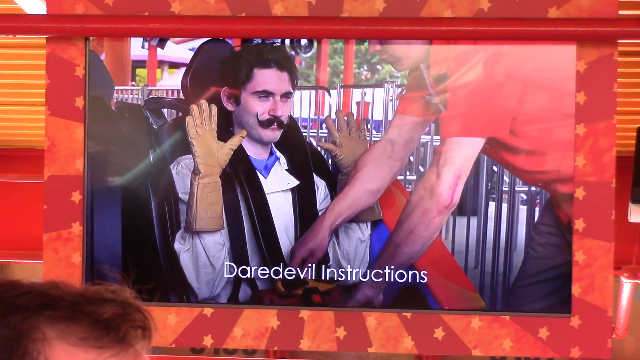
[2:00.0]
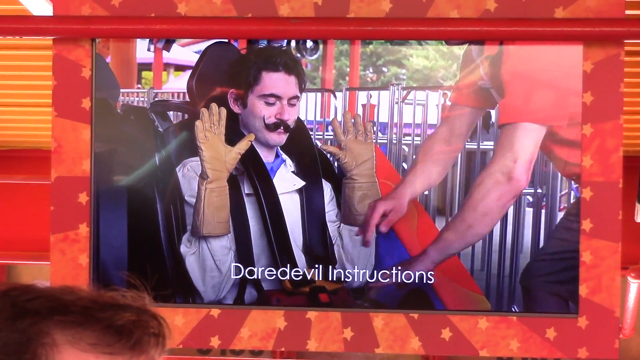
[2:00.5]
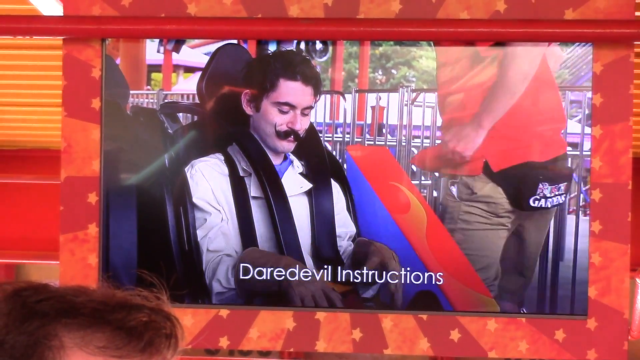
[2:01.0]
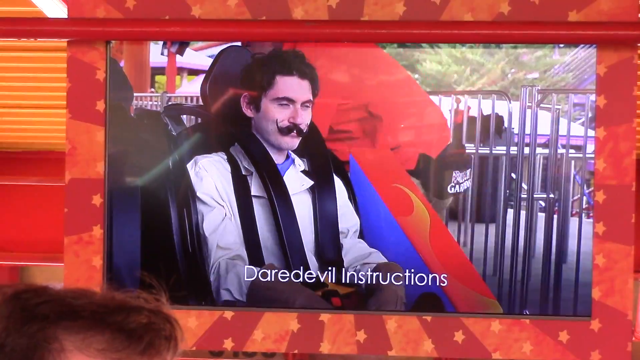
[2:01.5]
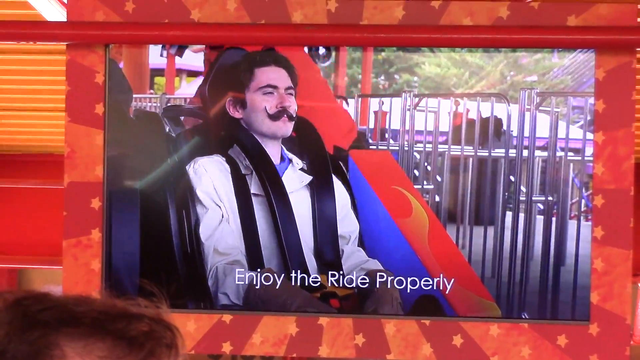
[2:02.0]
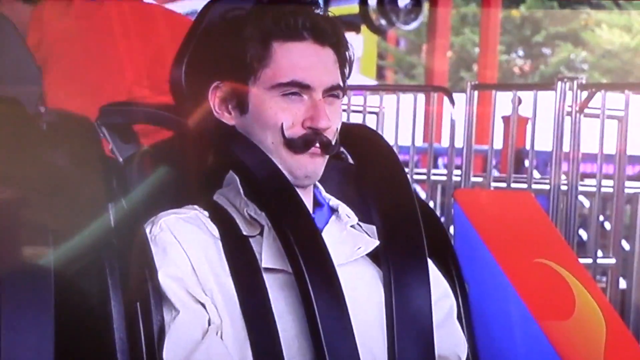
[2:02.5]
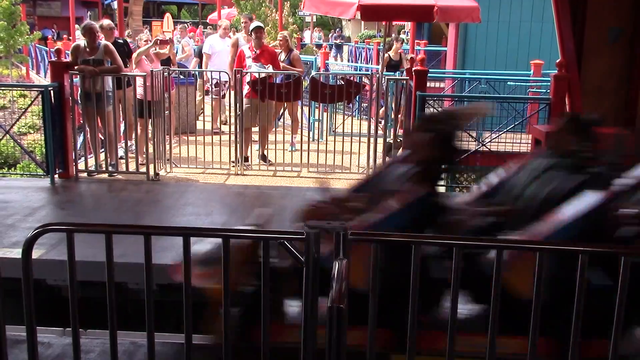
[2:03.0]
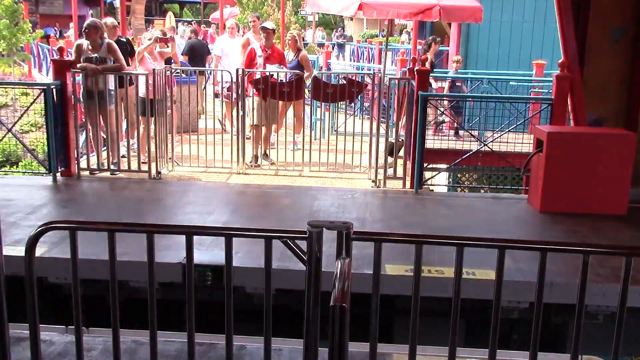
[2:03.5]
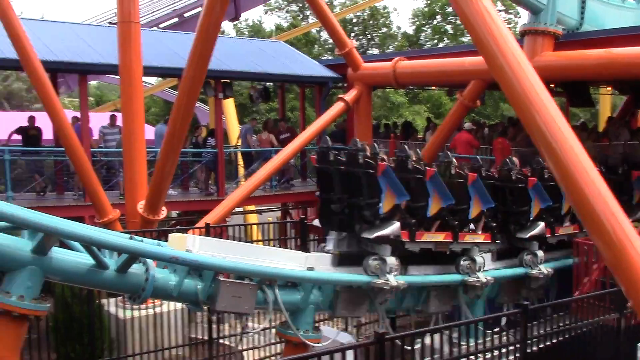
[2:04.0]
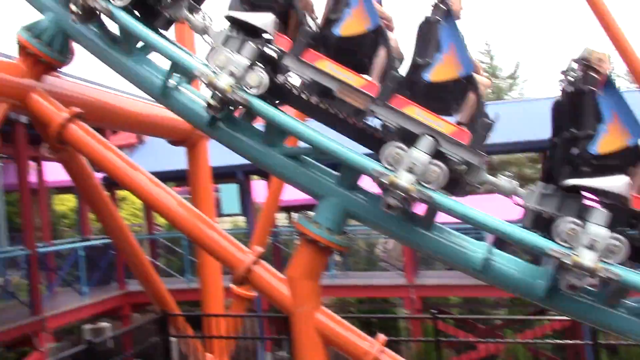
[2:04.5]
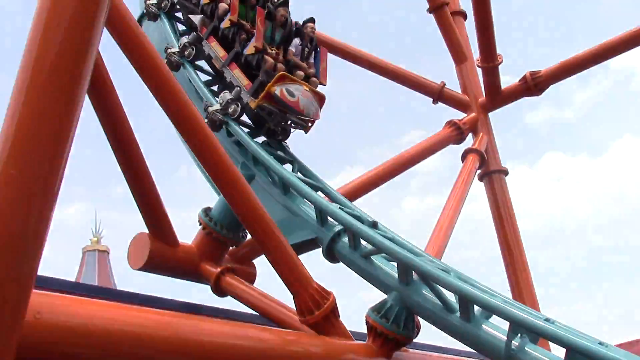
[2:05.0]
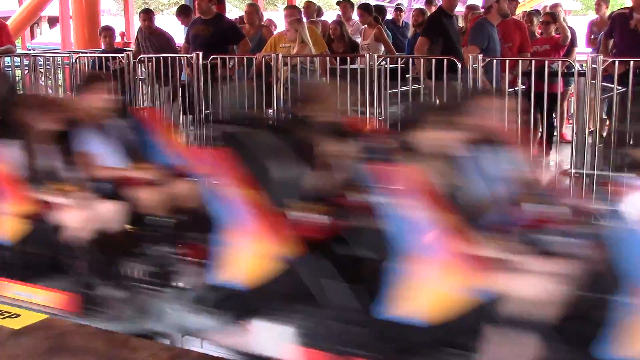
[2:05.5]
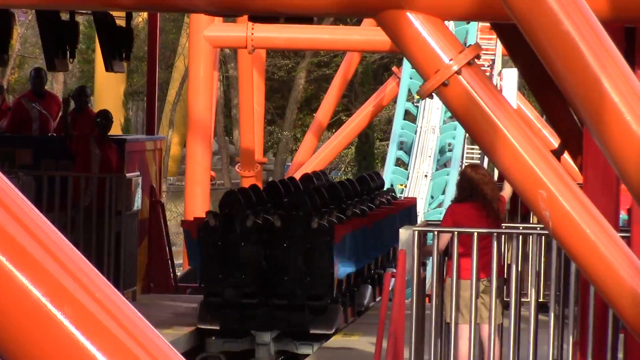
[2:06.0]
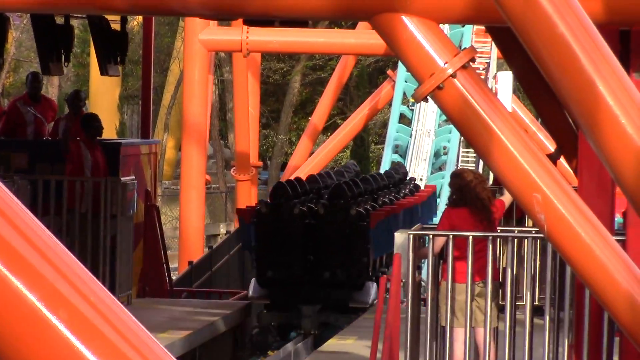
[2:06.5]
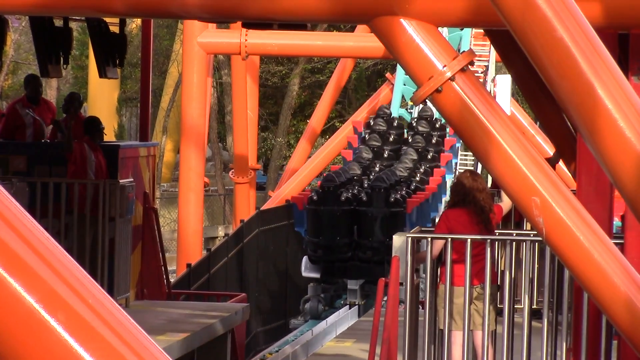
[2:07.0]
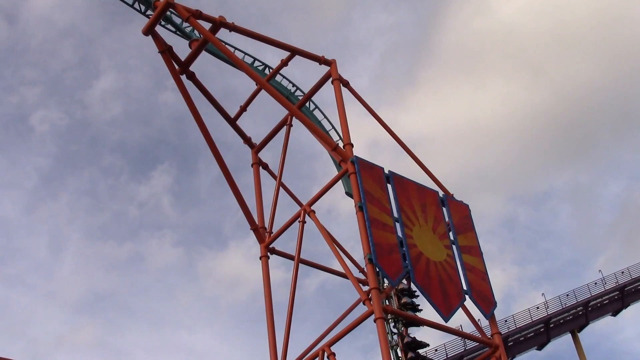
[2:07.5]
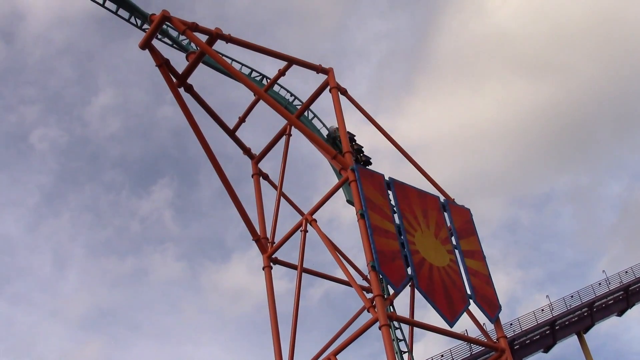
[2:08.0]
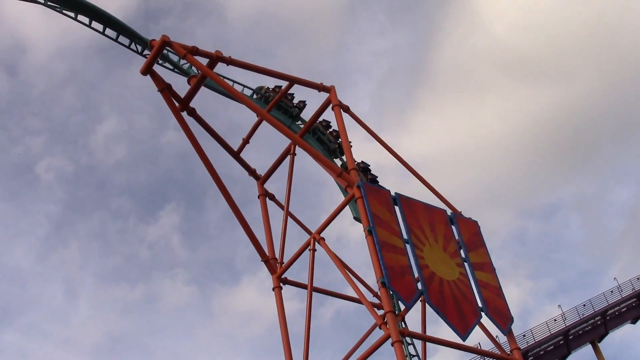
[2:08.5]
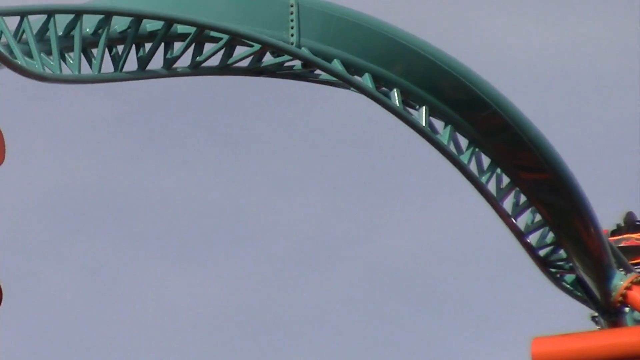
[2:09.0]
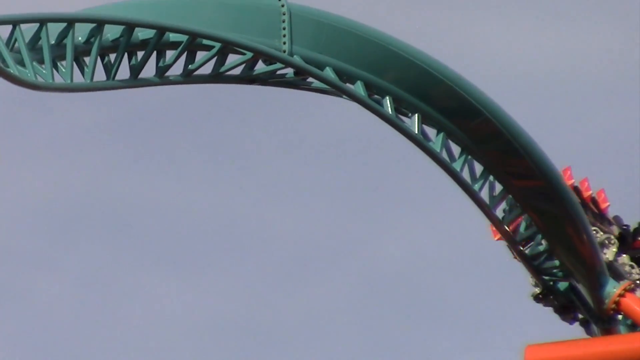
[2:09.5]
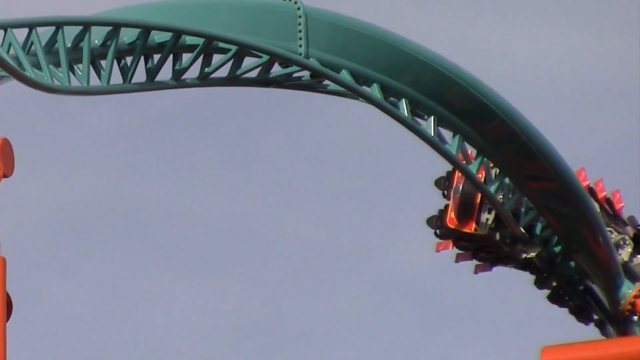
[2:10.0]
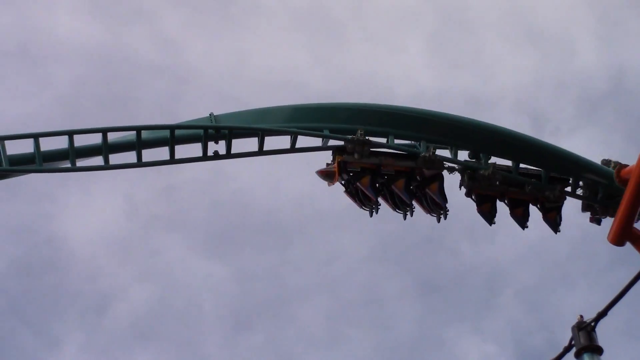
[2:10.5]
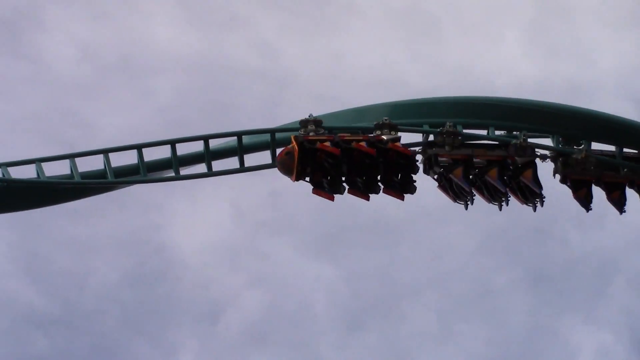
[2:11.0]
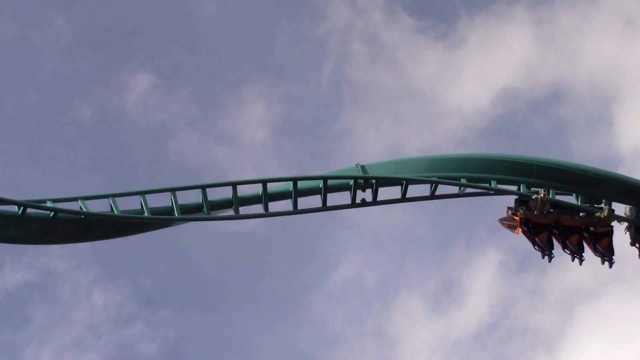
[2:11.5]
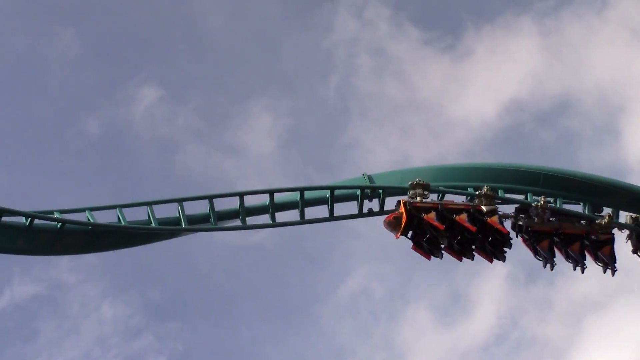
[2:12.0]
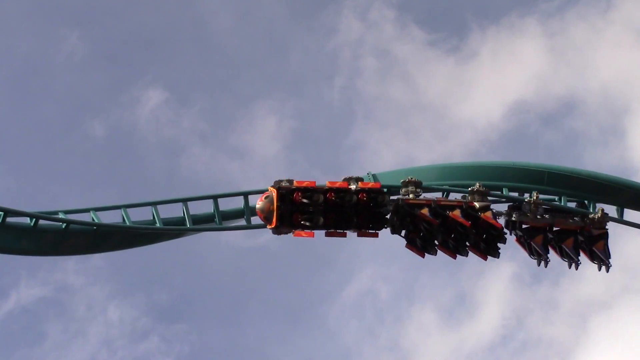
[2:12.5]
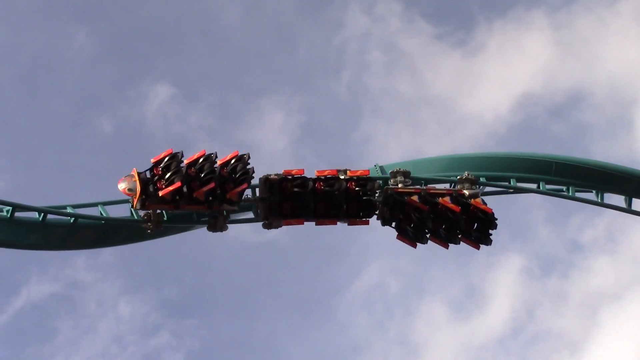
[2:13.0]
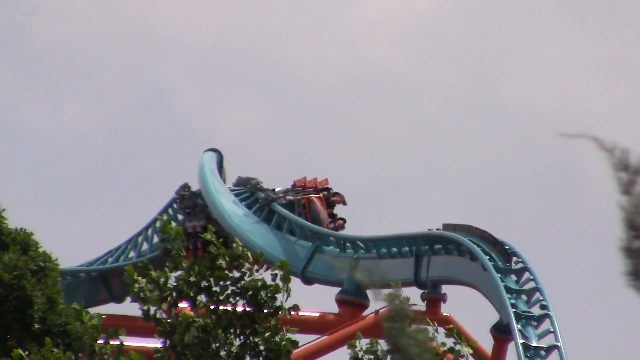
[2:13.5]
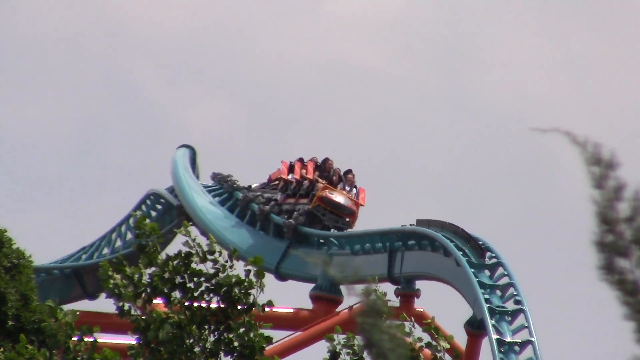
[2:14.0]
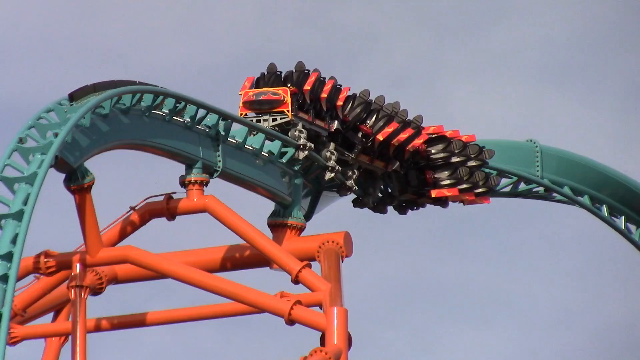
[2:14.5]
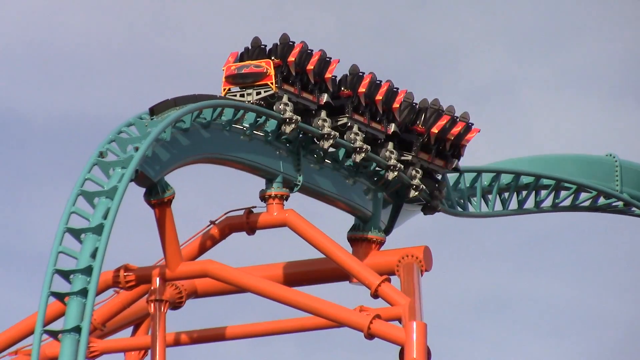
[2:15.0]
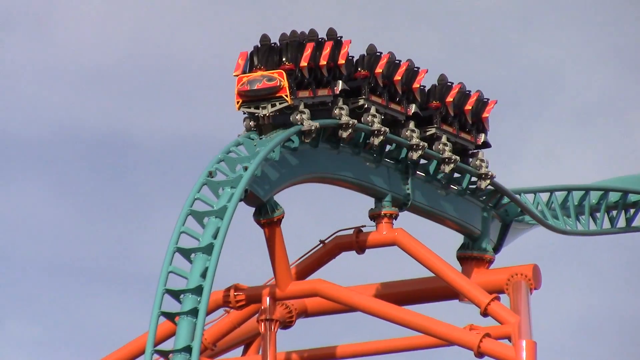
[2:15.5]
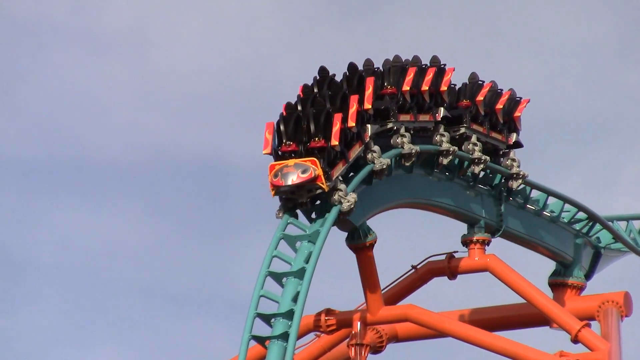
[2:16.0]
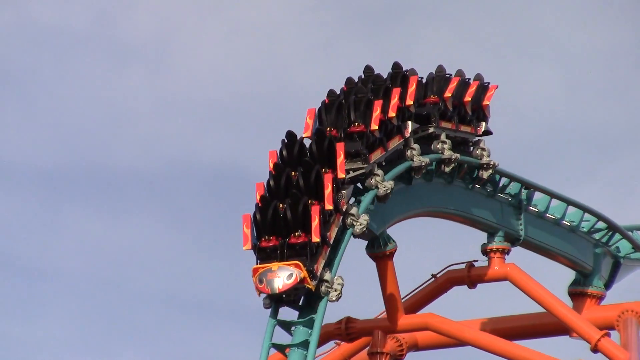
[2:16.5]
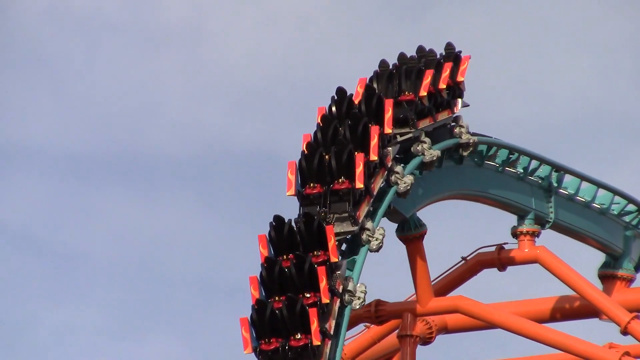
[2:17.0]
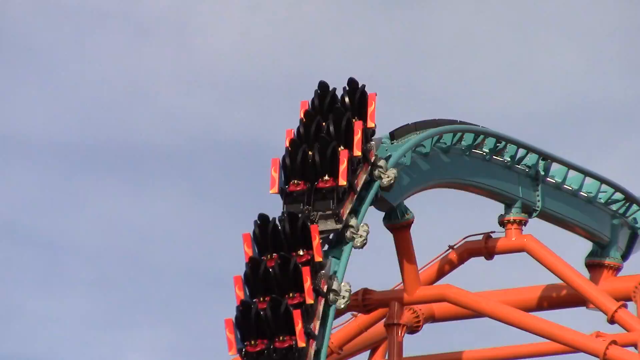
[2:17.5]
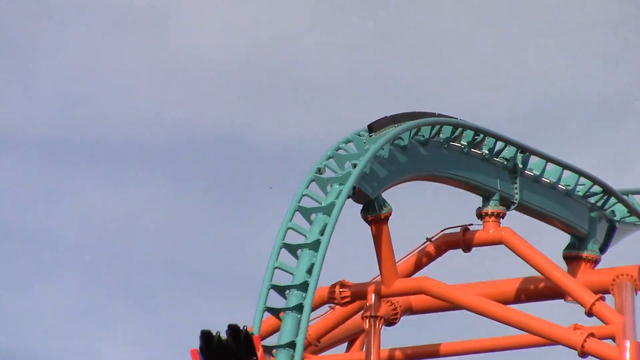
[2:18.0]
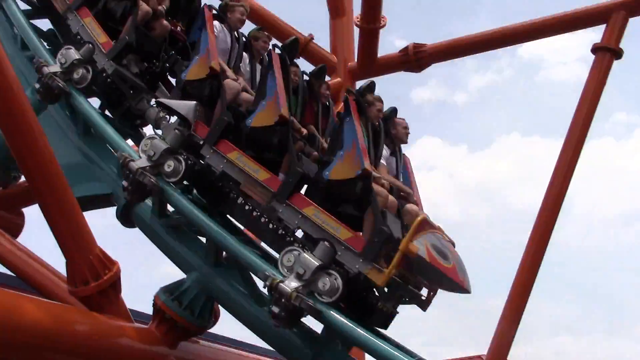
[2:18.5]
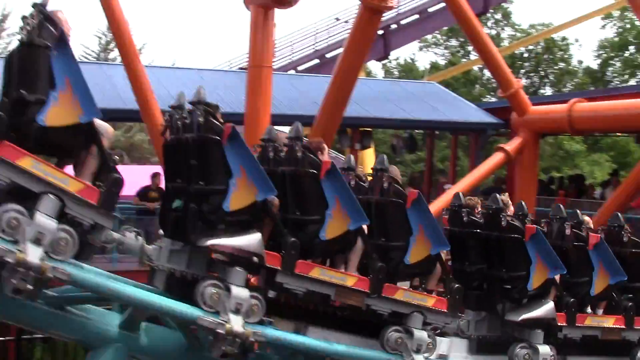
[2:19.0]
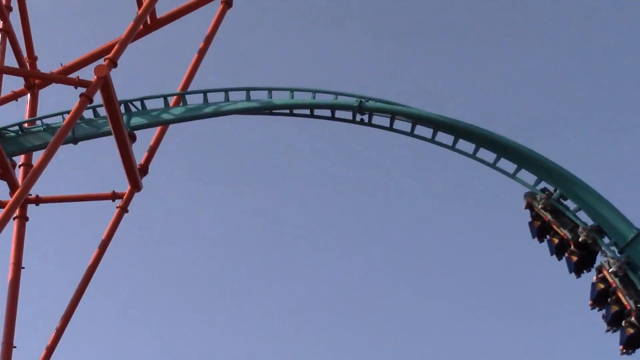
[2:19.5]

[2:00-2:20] A Caucasian man with black hair and a very large, pronounced curly mustache, wearing a white long-sleeve collared shirt and brown gloves, sits in the coaster while a worker in a red shirt attends to him. On-screen words read "daredevil instructions, enjoy the ride." A close-up shows him with kind of a smirk as he gets ready to ride. A shot focuses on an area of the ride rather than the ride itself, with the roller coaster zipping past in the bottom portion and gates in the background with people on the other side. The coaster shoots up a loop-de-loop, followed by a very quick cut of it almost traveling backwards. A shot from behind shows it starting up a loop-de-loop. Several quick cuts follow of the coaster going up an incline and through twisty turns, with about five different angles of the twisting swirl, from the side and from the front. The coaster then descends from the loop-de-loop and continues further down it.